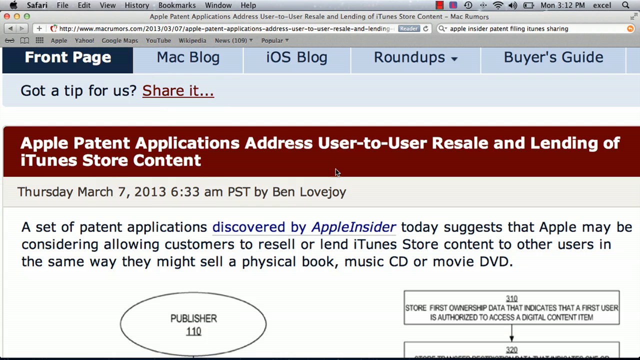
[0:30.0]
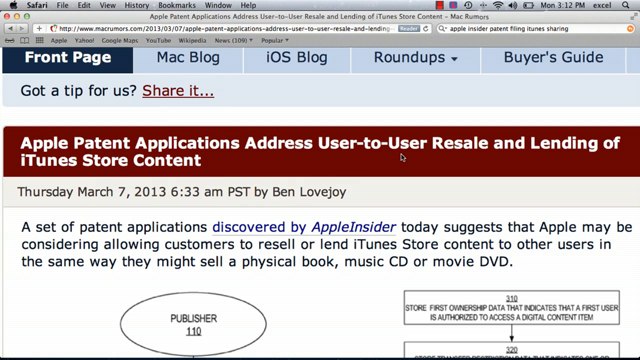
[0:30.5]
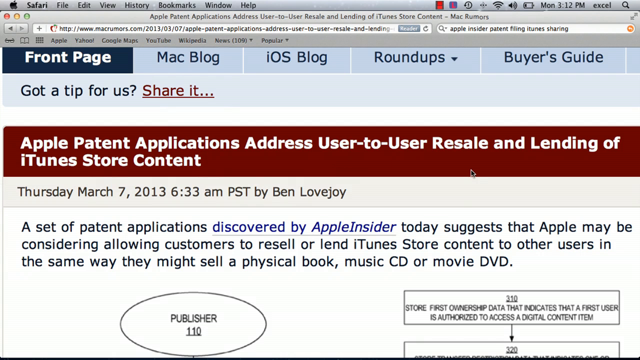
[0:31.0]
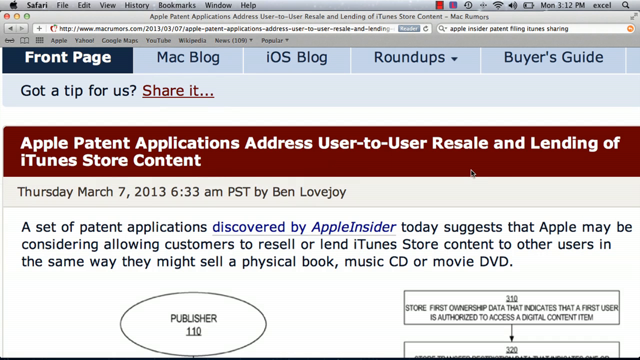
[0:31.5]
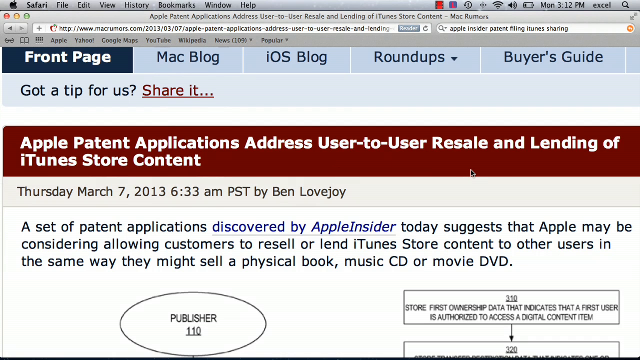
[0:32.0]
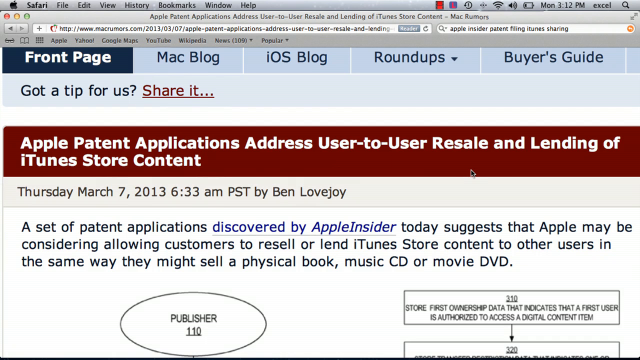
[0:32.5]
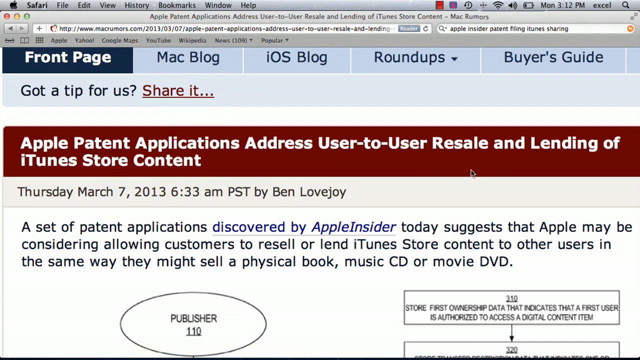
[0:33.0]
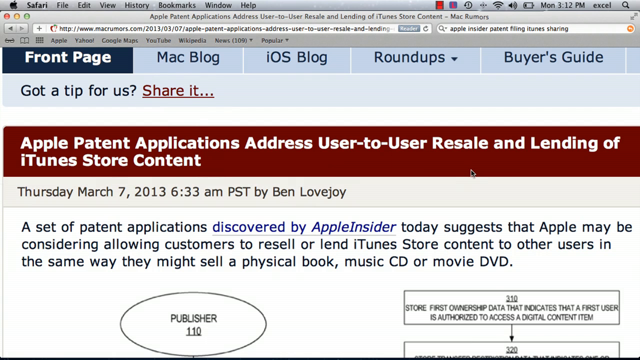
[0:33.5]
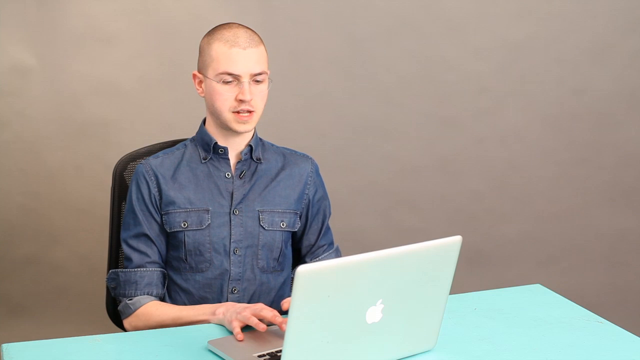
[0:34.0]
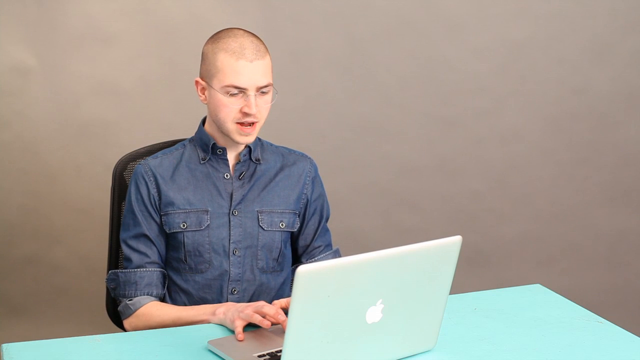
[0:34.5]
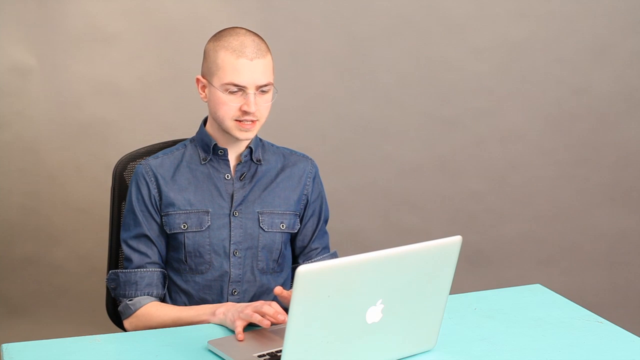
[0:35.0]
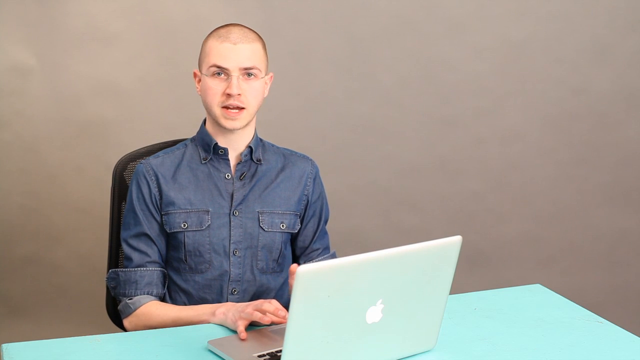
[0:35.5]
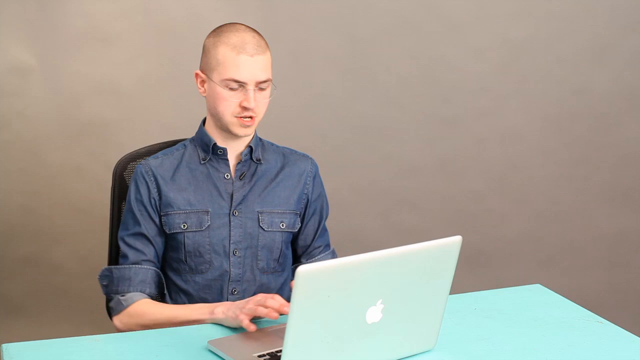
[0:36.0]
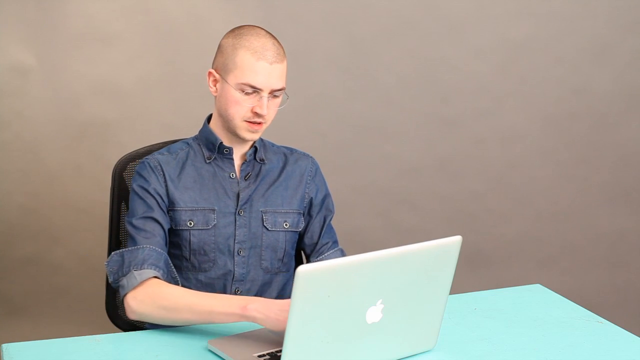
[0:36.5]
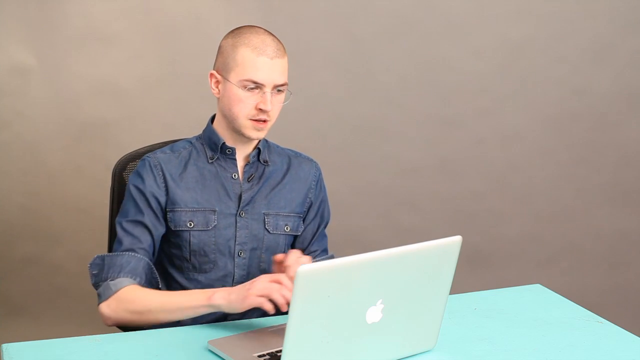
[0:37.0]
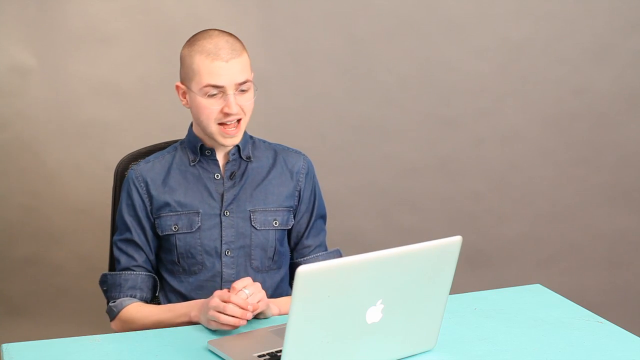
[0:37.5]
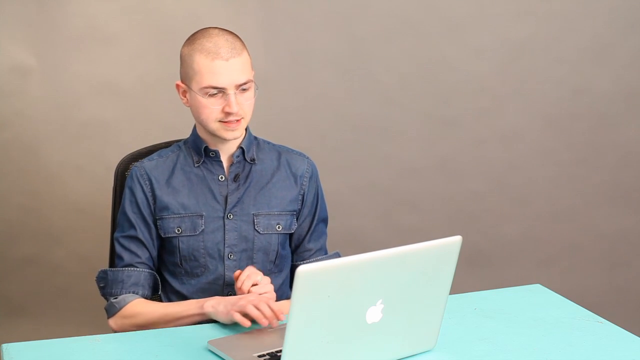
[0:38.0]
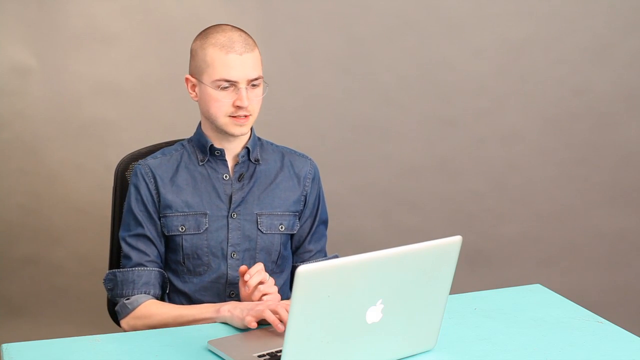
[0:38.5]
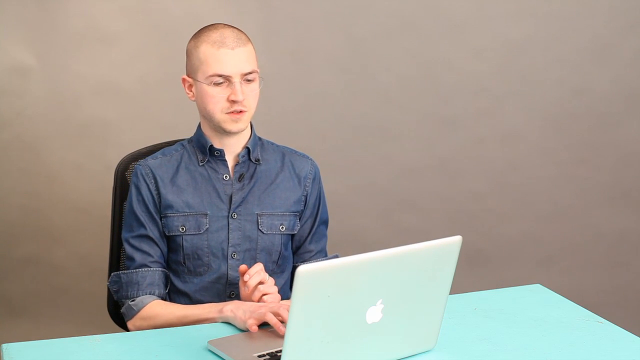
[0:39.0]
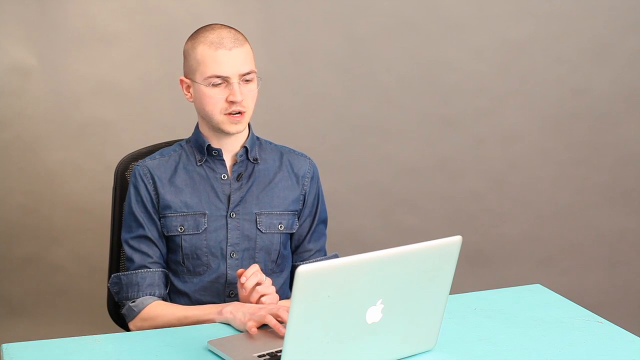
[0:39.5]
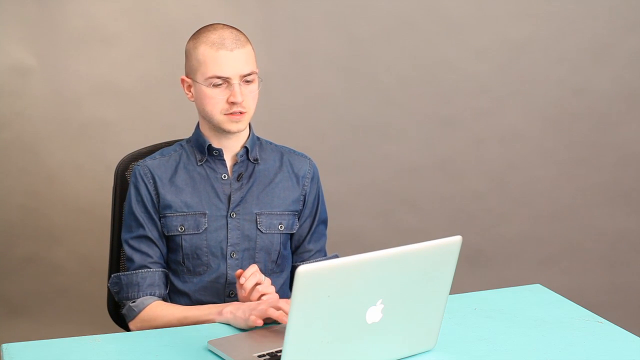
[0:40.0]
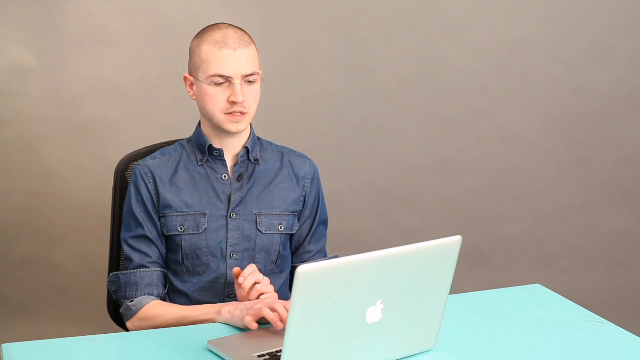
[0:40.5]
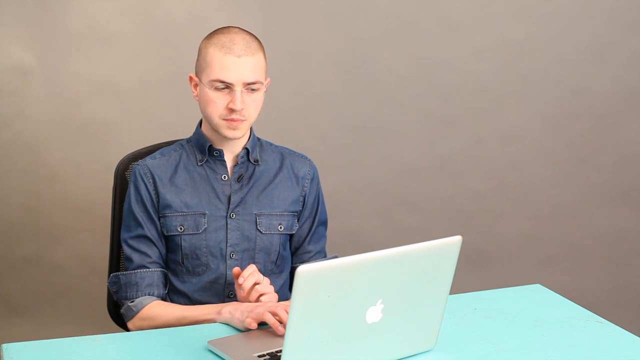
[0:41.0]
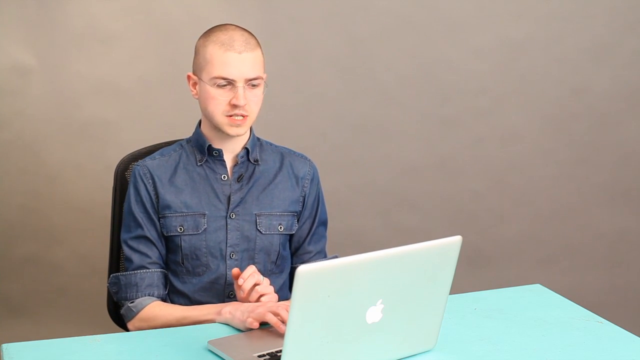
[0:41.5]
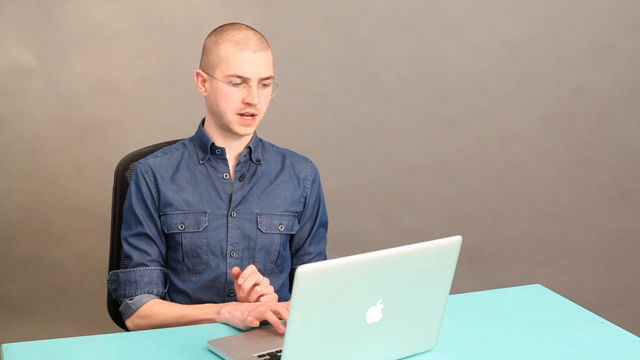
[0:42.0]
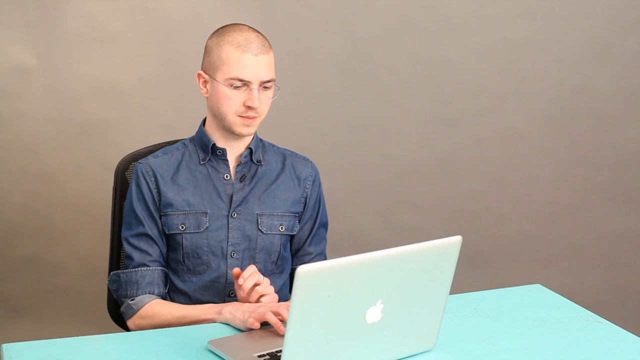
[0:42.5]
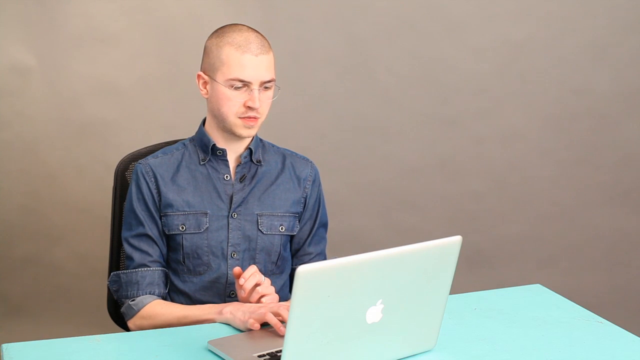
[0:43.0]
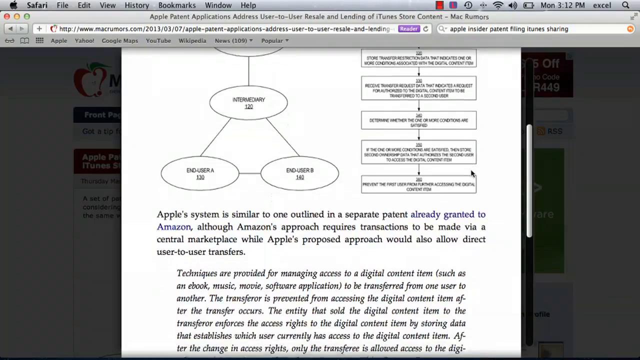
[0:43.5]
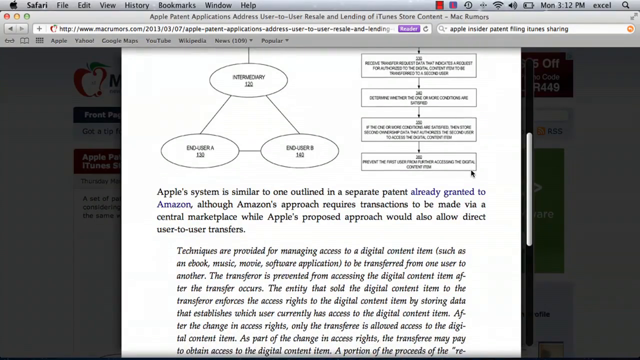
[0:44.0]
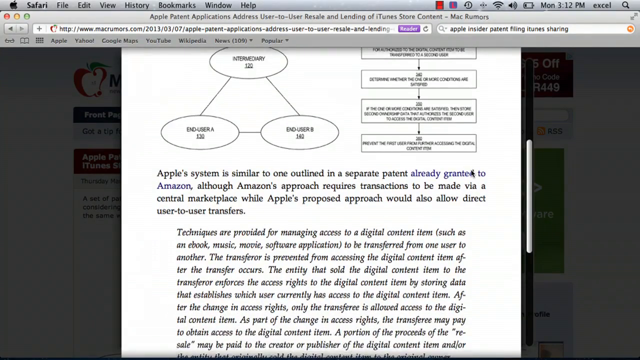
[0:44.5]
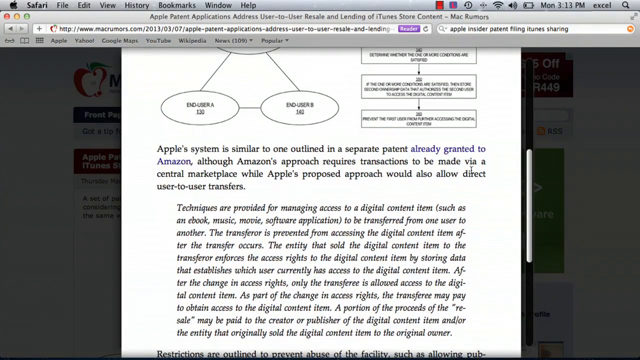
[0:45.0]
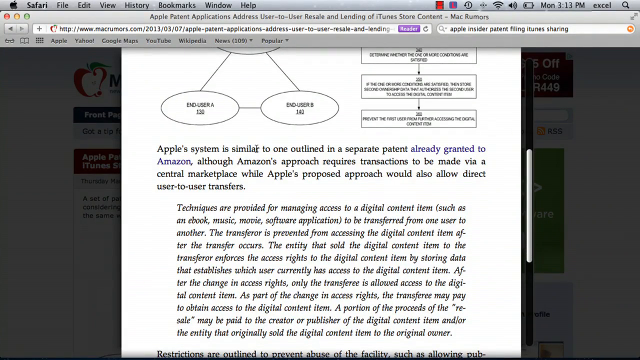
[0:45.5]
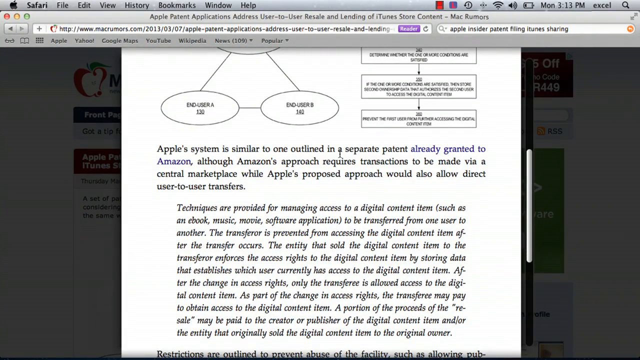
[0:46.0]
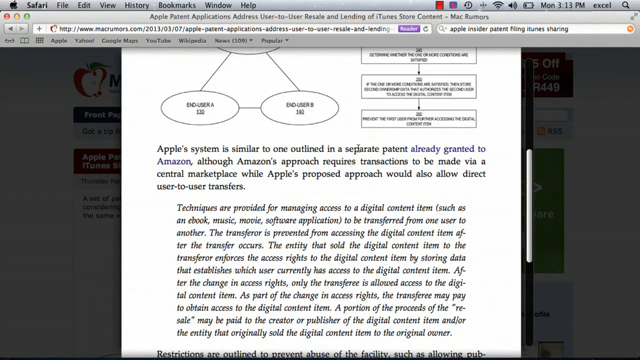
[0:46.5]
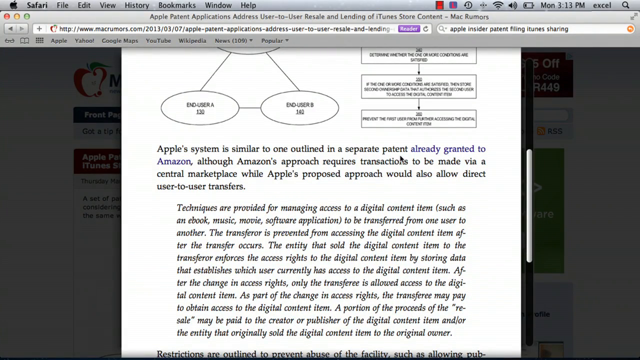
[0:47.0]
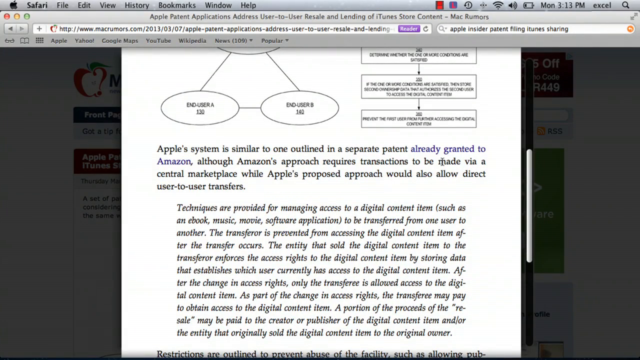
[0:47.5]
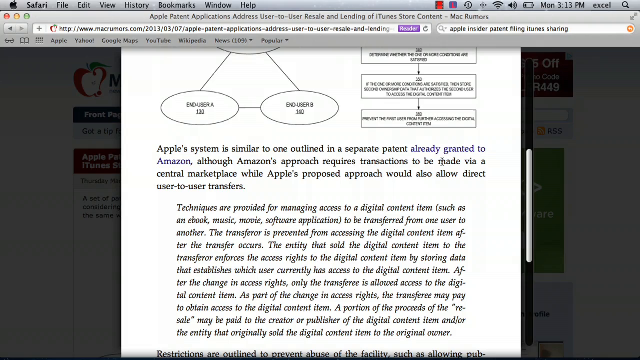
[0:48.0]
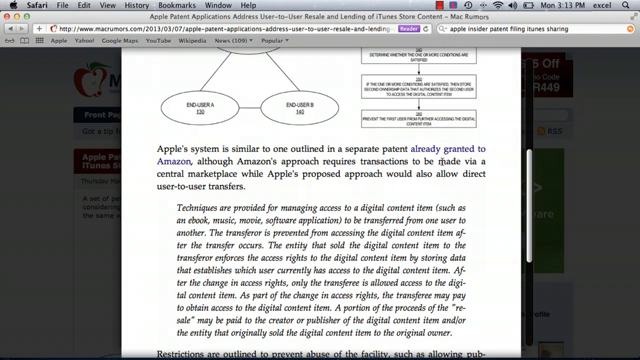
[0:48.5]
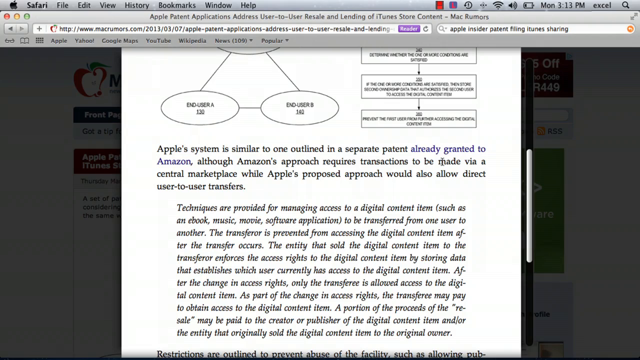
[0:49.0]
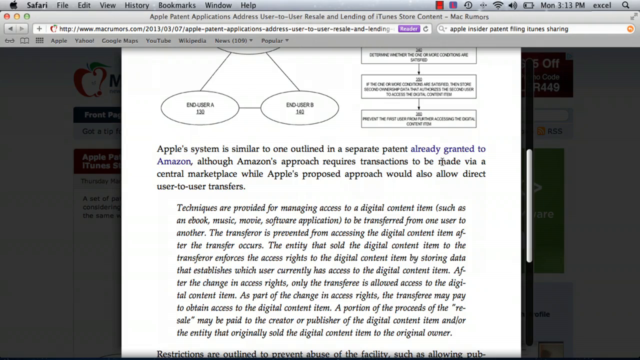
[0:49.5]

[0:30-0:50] The MacRumors webpage continues, and the view zooms into a portion of the page with a kind of maroon-red background and white text, a header concerning Apple's patent application on user-to-user resale and lending of iTunes Store content. Below it is more information in black text about the webpage content. The video then transitions back to the room with the grayish background, where the Macintosh Apple device and Skyler Kelly are visible: kind of young, with short hair, white skin and the denim shirt, again explaining and talking about something. It then transitions to another page with a white background and lots of black text, on the macusers.com website.